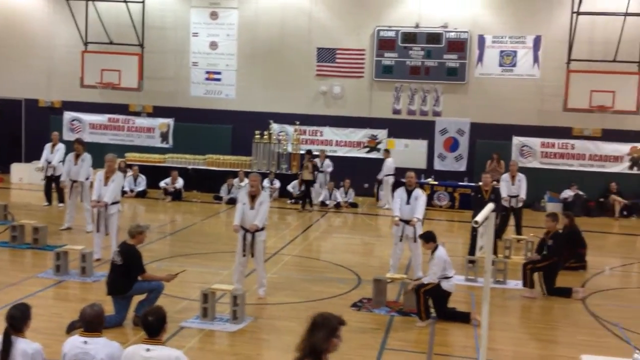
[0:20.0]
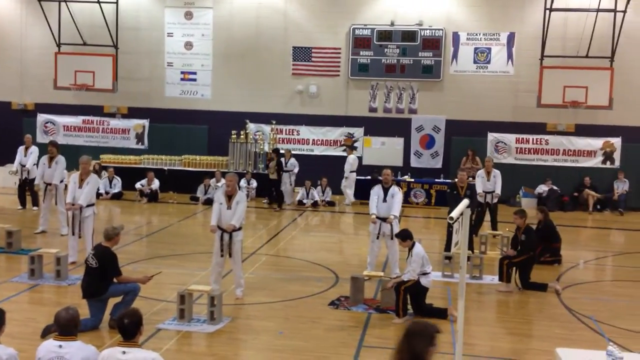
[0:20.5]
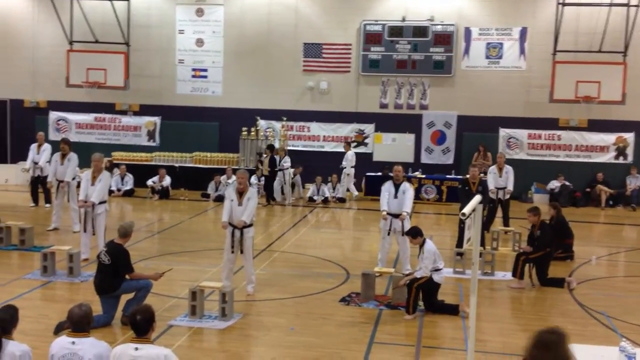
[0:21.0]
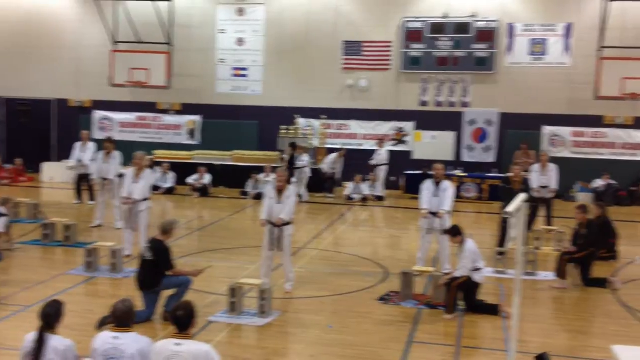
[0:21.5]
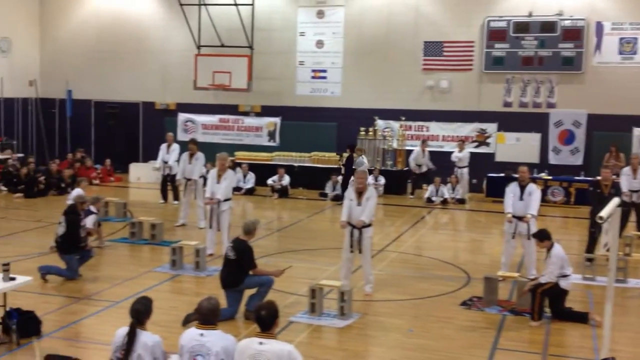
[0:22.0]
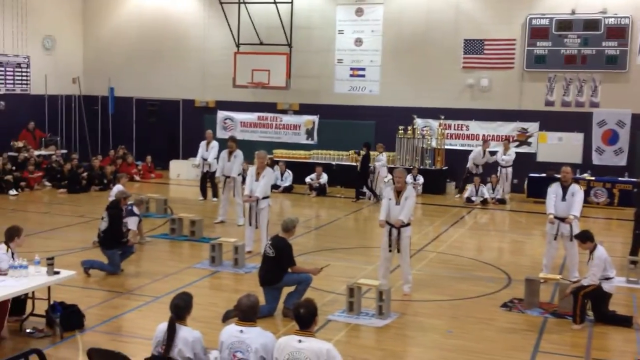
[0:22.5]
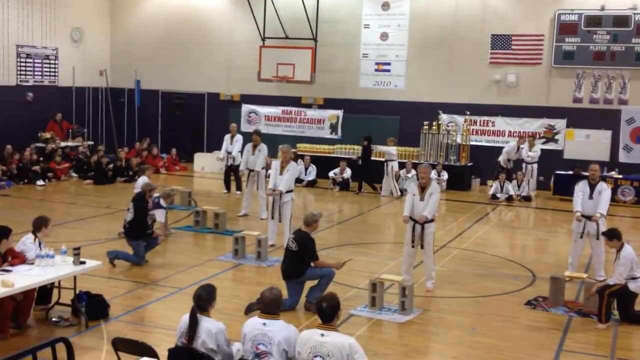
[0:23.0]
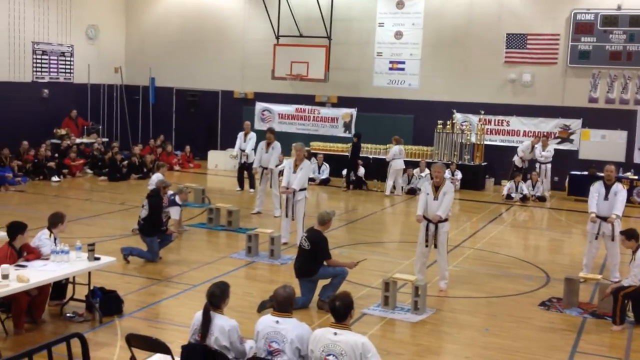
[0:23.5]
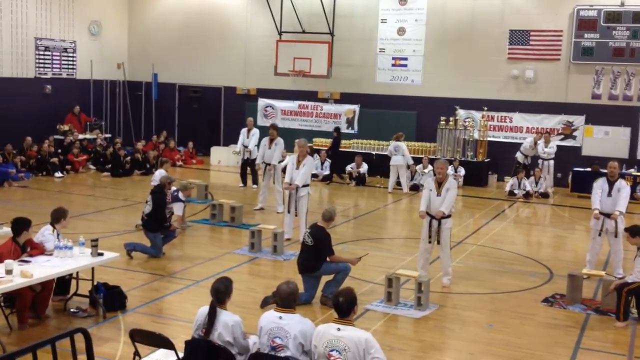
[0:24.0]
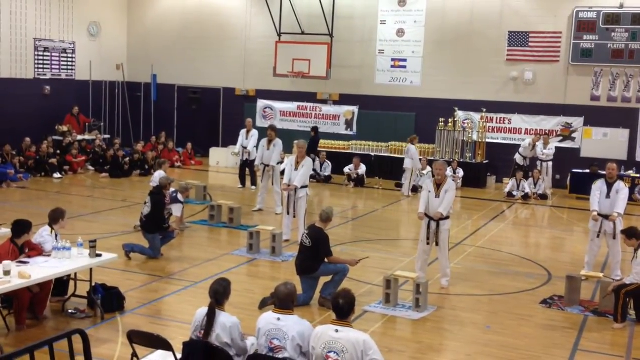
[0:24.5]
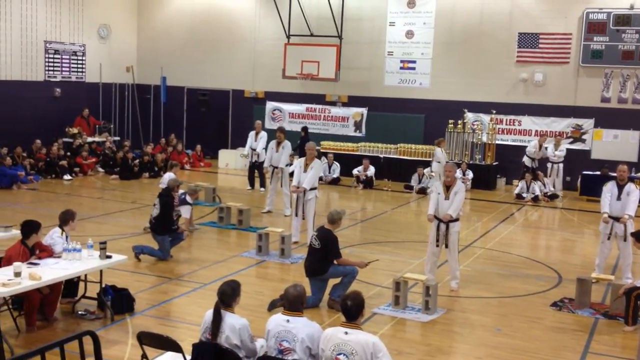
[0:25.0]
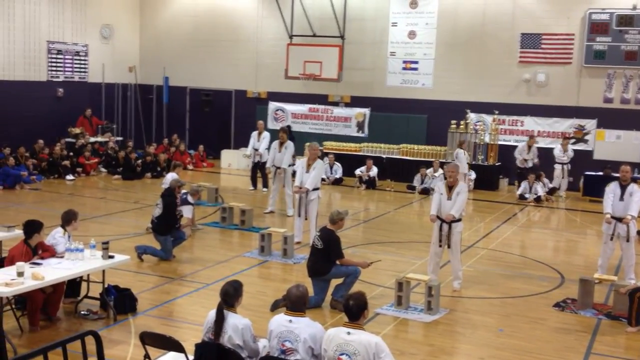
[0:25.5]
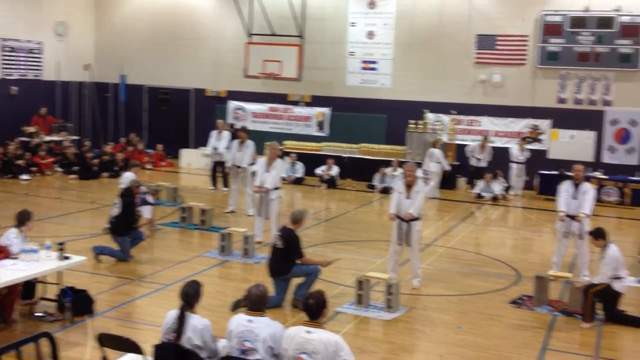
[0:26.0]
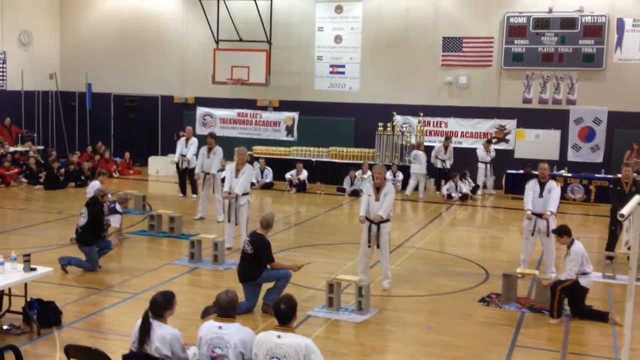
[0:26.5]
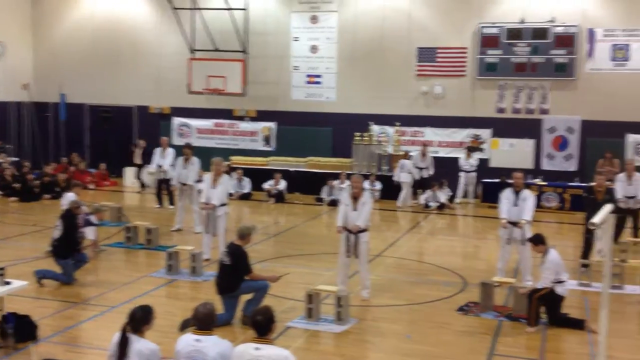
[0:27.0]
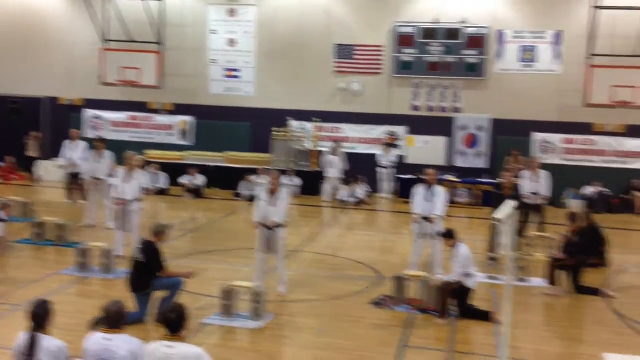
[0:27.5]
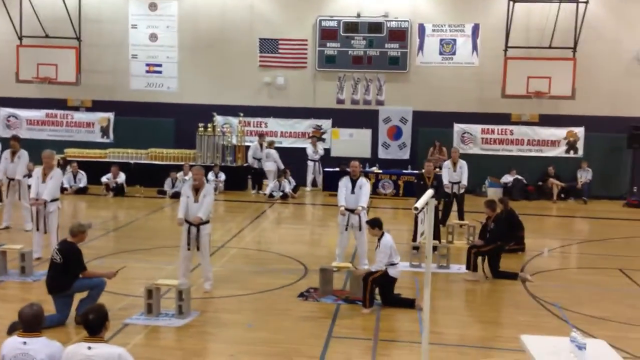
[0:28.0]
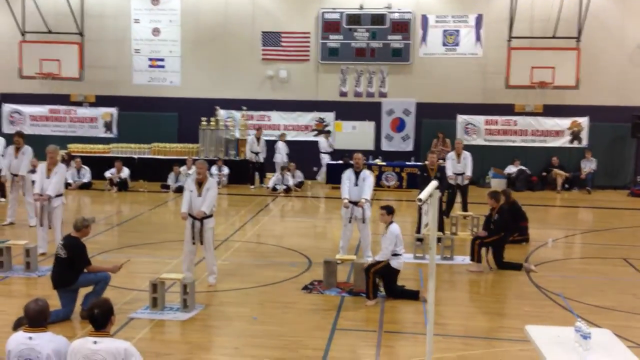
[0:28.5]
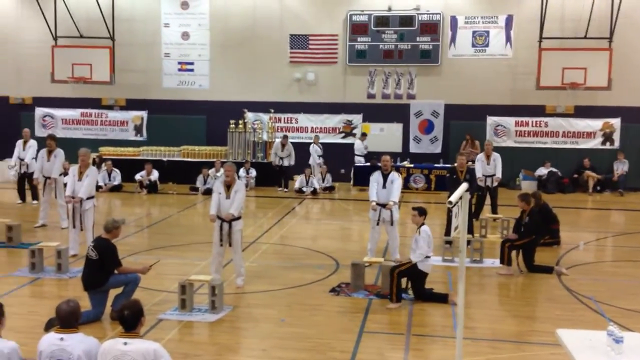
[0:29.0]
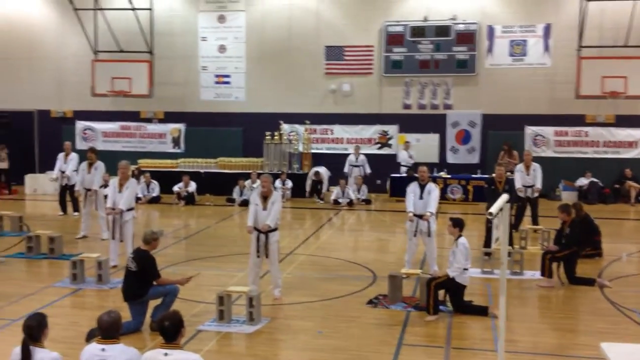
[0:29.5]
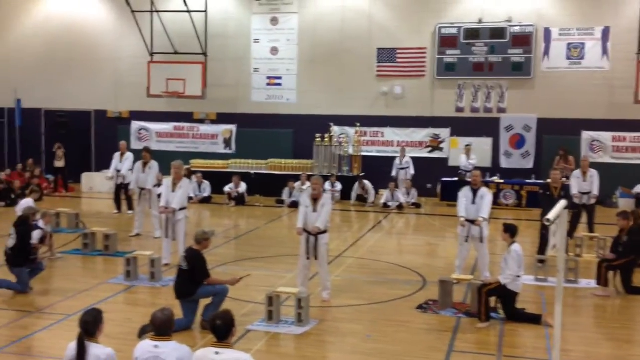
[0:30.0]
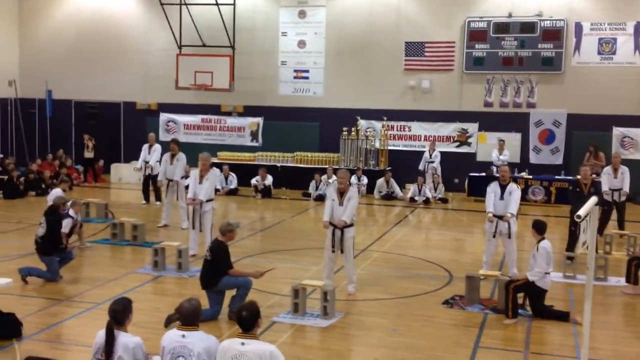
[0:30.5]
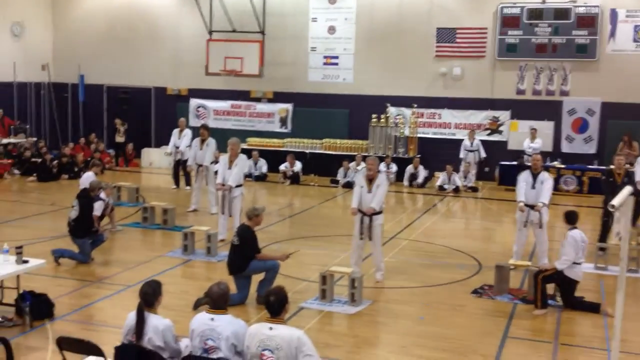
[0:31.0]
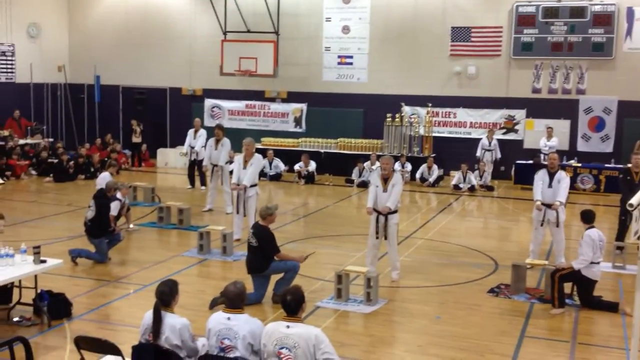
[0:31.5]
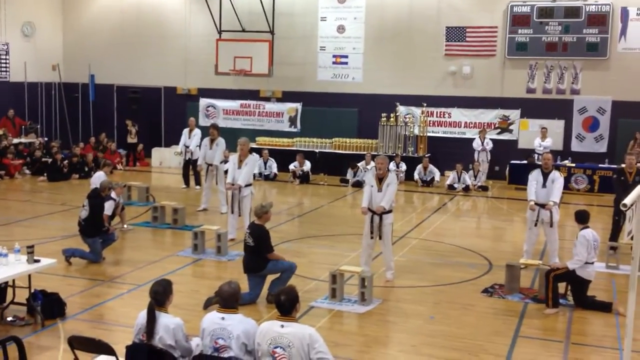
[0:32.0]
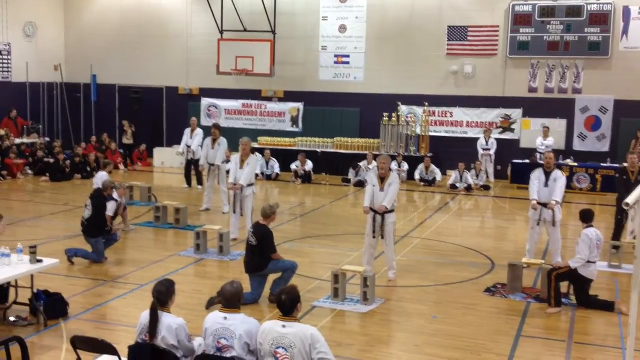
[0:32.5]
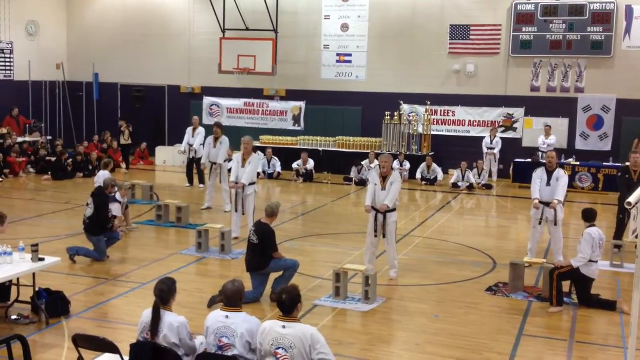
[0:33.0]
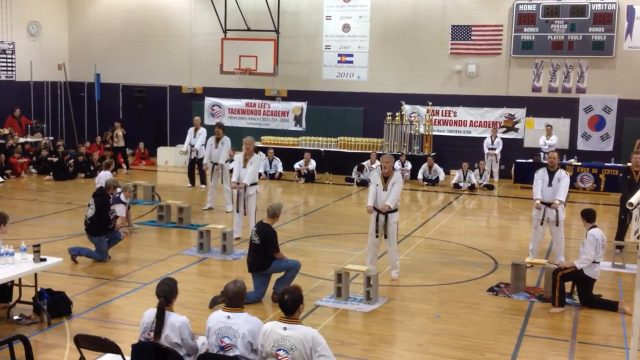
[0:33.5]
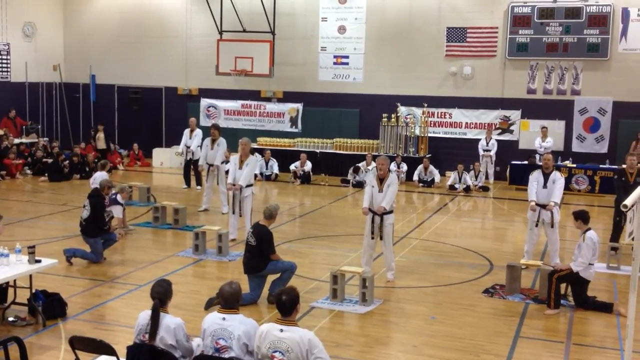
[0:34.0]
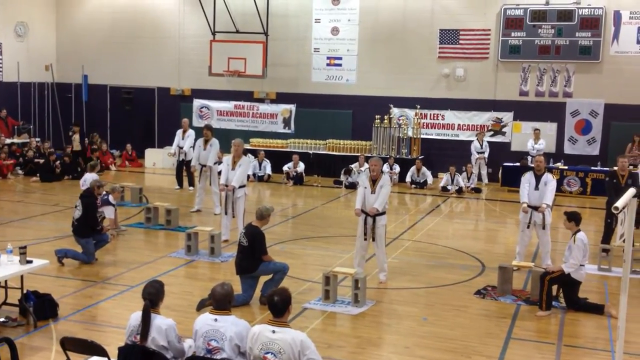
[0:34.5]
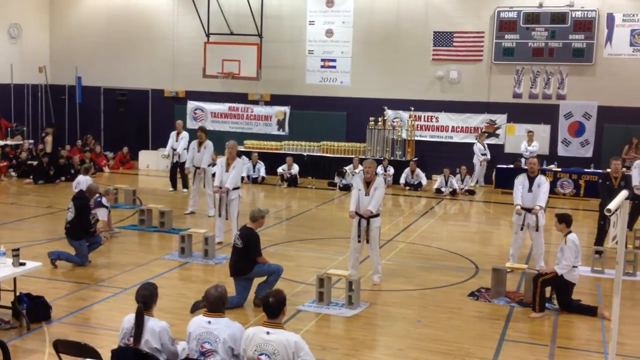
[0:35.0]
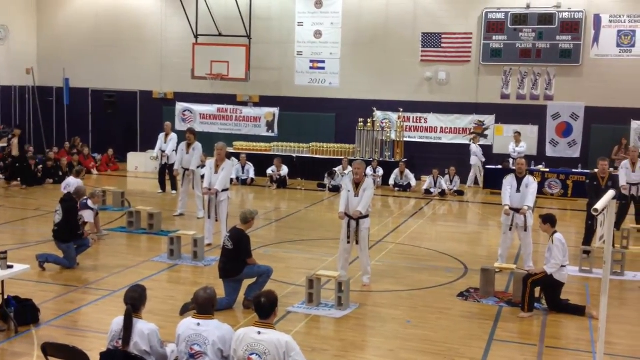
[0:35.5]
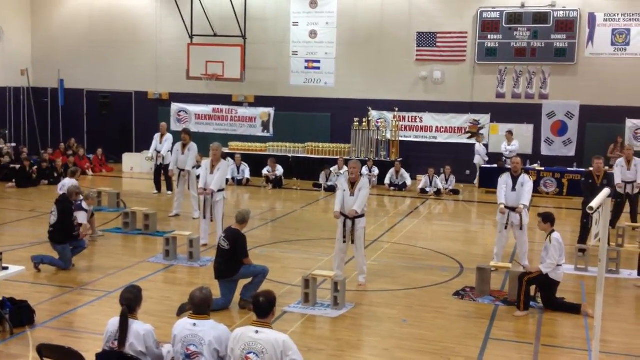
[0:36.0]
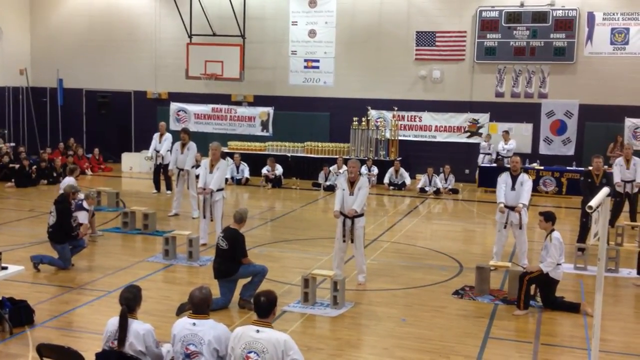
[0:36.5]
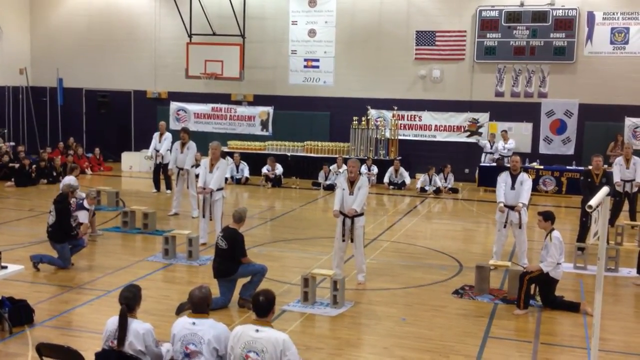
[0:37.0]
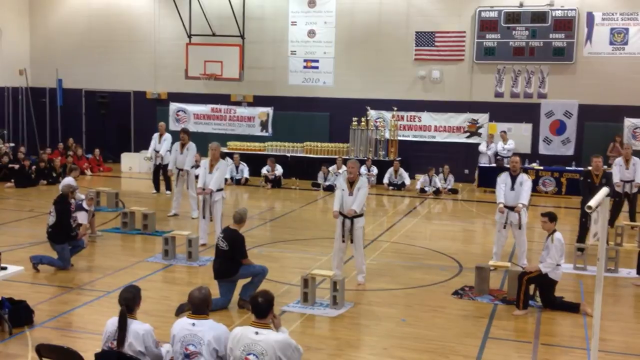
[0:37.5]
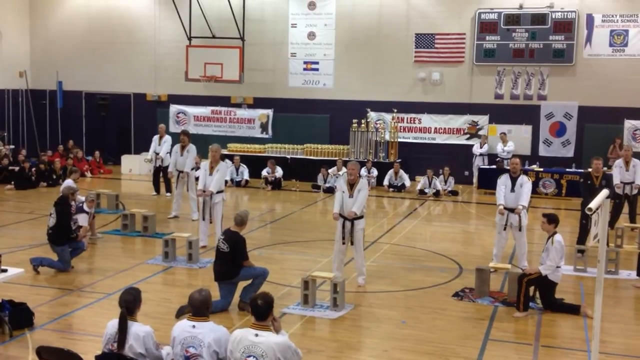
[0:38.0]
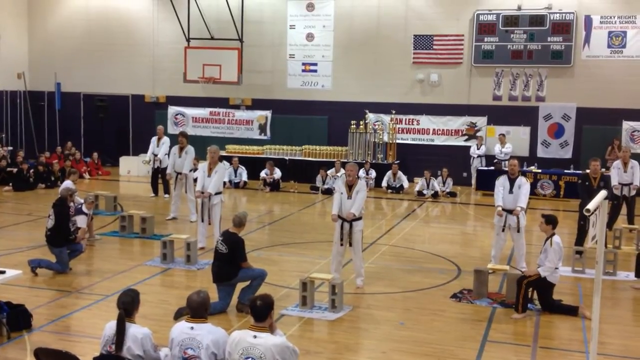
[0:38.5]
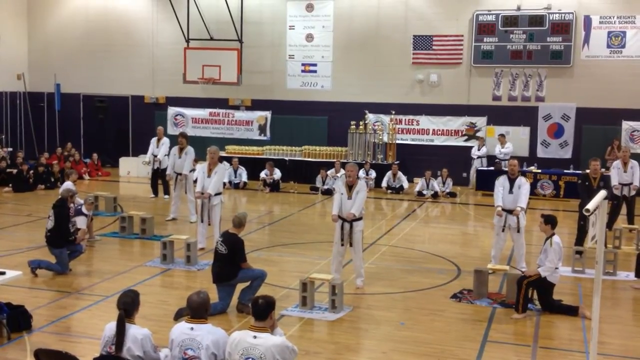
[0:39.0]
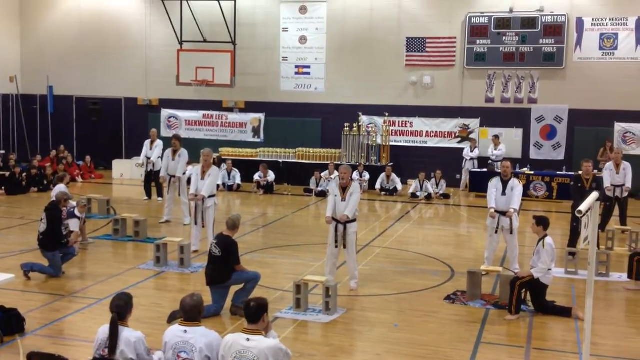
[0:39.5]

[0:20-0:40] The performers keep standing in position with their arms out while some people walk in the background and everyone watches. People kneel by each set of bricks and wood. In the back, someone points and talks to someone else. The performers in taekwondo outfits in the middle of the gym stand in front of the wooden pieces with their feet spread shoulder-width apart and their arms out in front of them; their hands might be in fists, though it is unclear. The kneeling people stay next to them by the wood, and everyone waits in position. When the camera pans over a couple of times, plastic white tables toward the front of the gym come into view, with people sitting at them, apparently many of them kids, all turned and watching. People sitting along the wall are also visible for a glance.